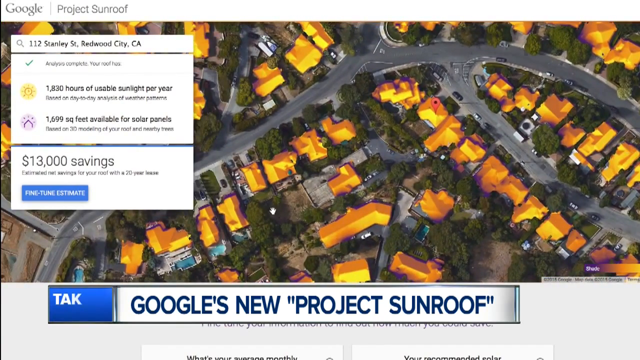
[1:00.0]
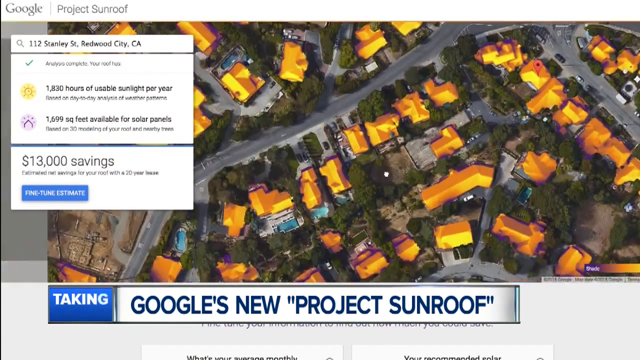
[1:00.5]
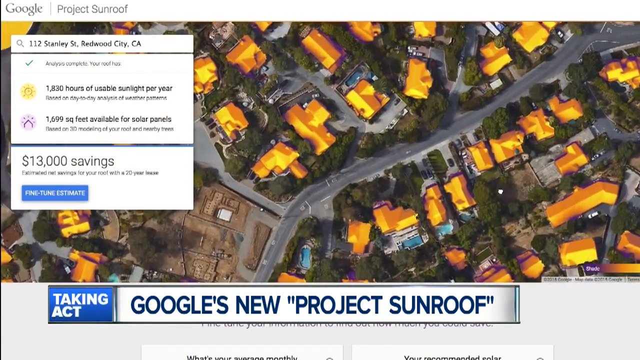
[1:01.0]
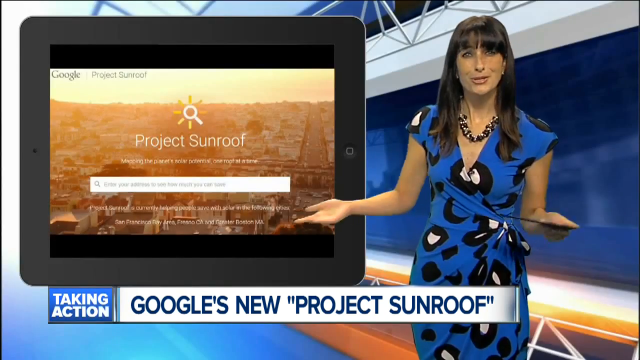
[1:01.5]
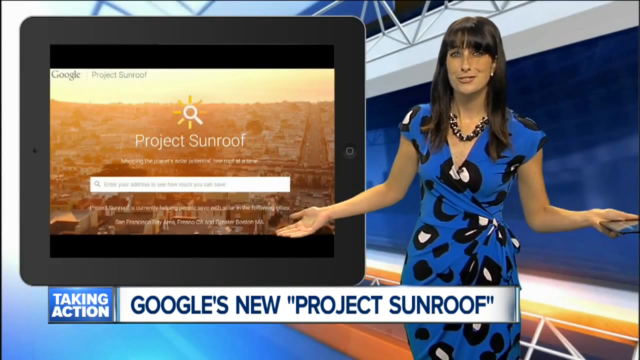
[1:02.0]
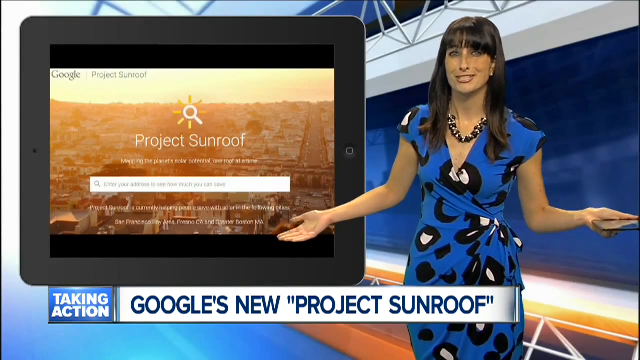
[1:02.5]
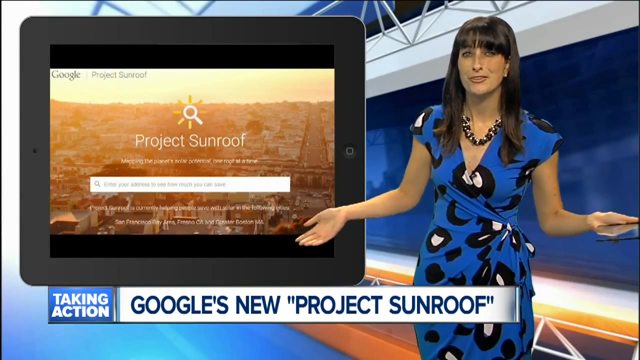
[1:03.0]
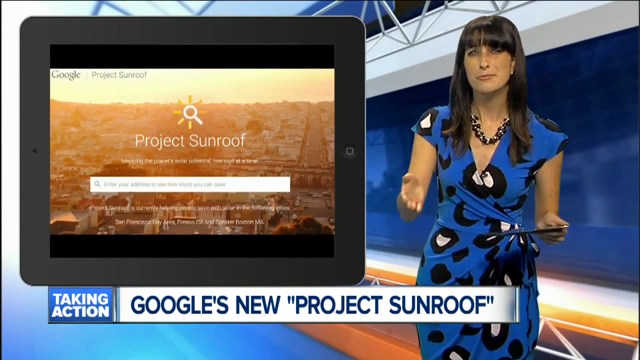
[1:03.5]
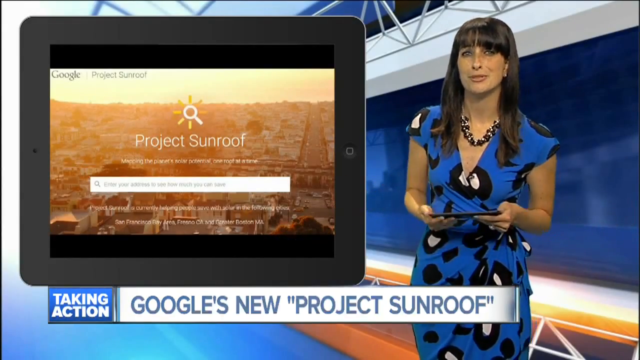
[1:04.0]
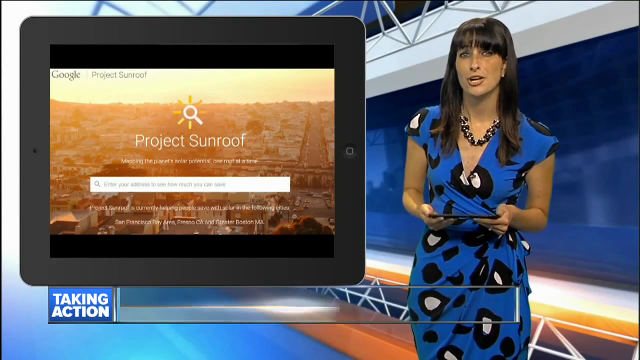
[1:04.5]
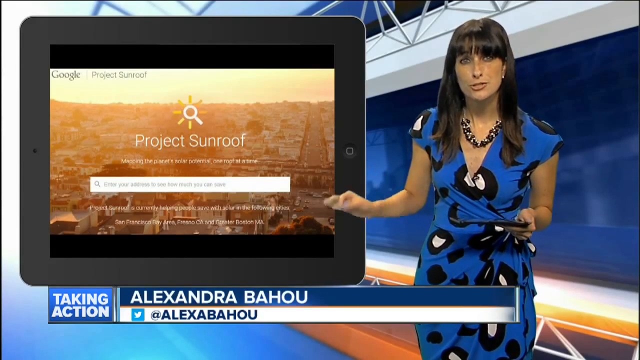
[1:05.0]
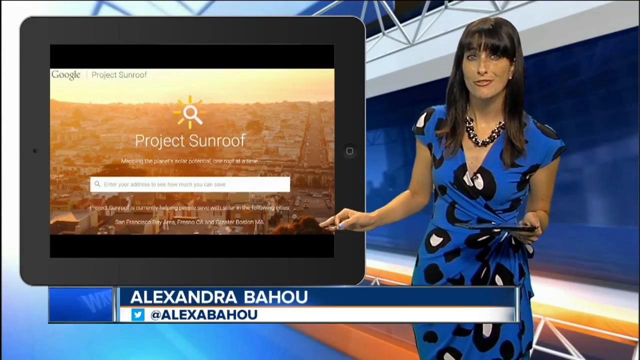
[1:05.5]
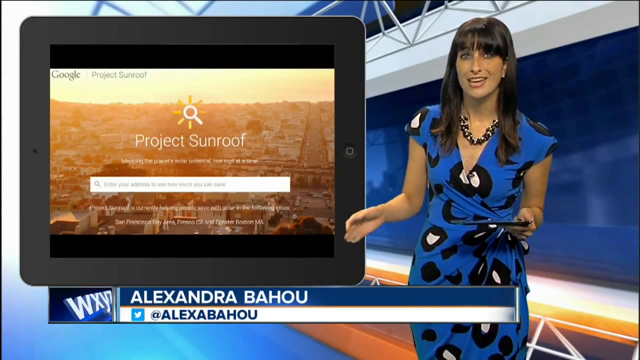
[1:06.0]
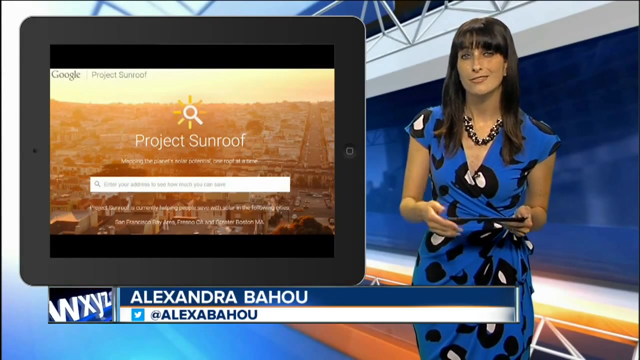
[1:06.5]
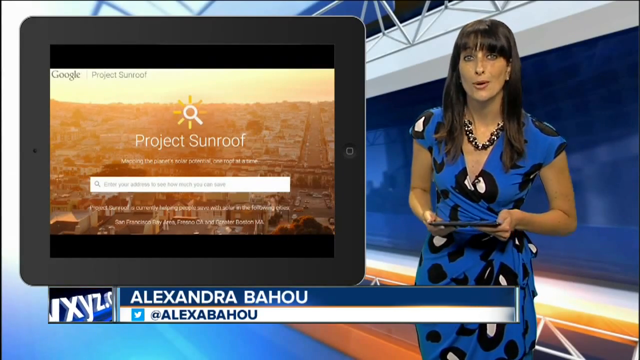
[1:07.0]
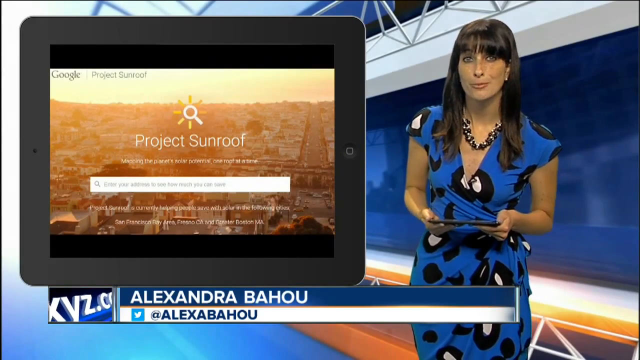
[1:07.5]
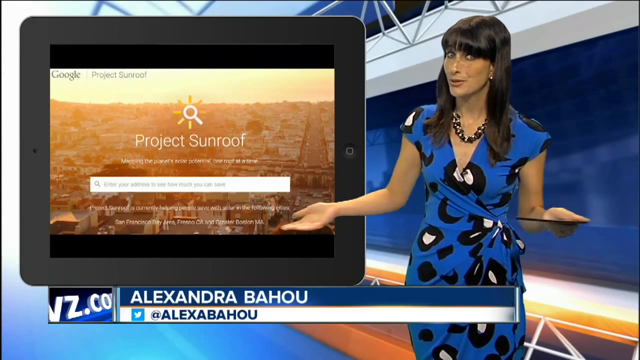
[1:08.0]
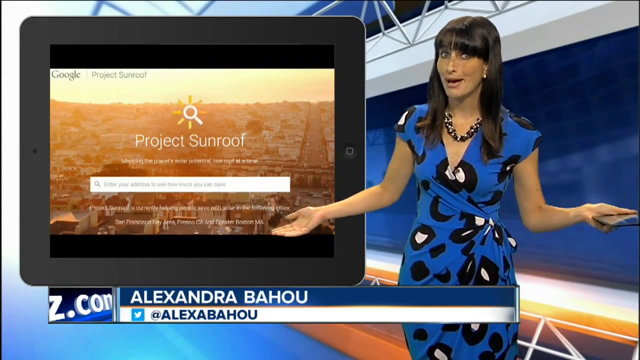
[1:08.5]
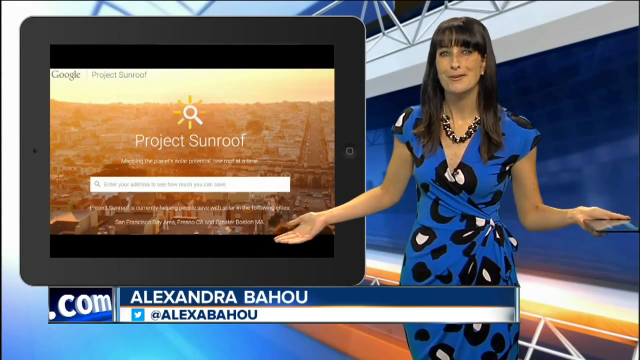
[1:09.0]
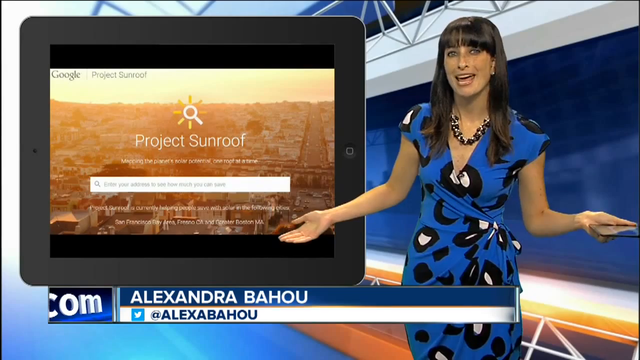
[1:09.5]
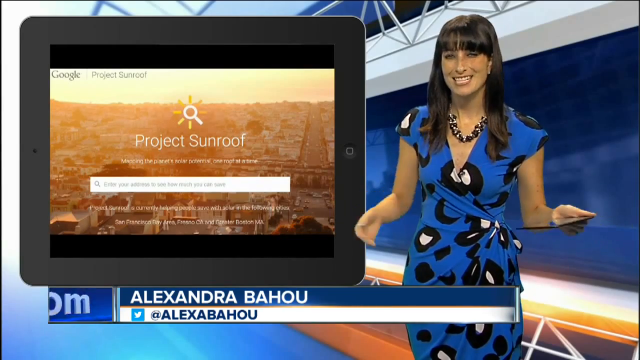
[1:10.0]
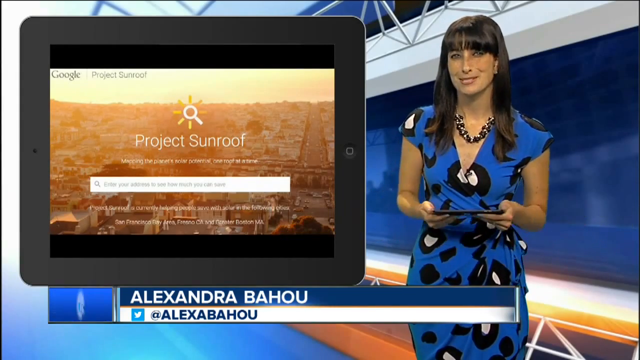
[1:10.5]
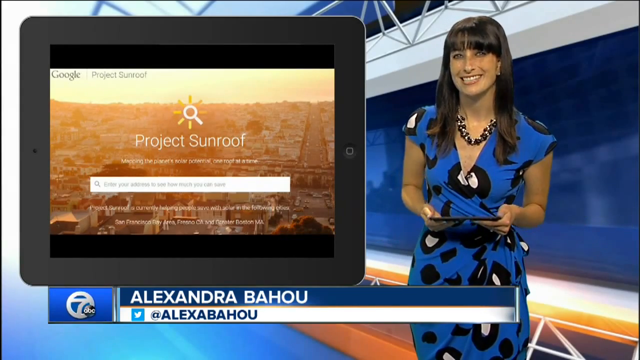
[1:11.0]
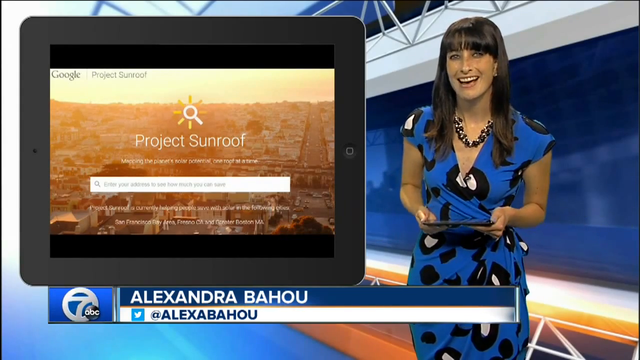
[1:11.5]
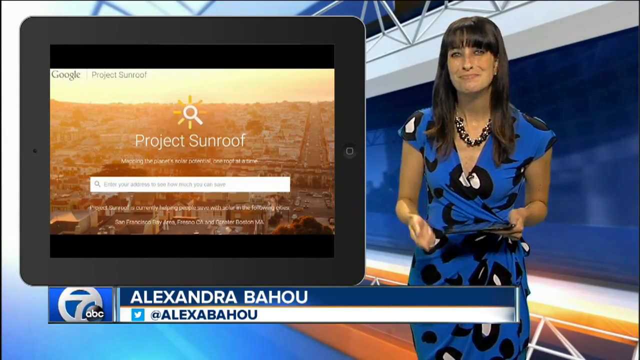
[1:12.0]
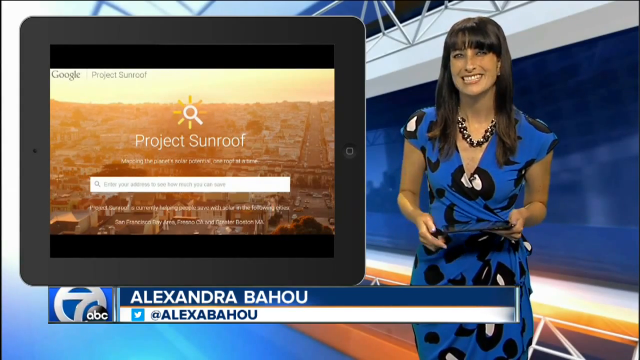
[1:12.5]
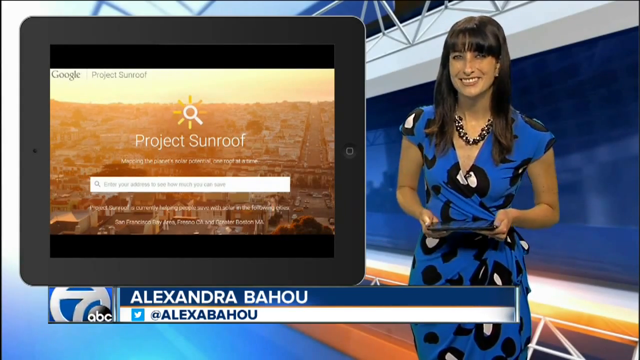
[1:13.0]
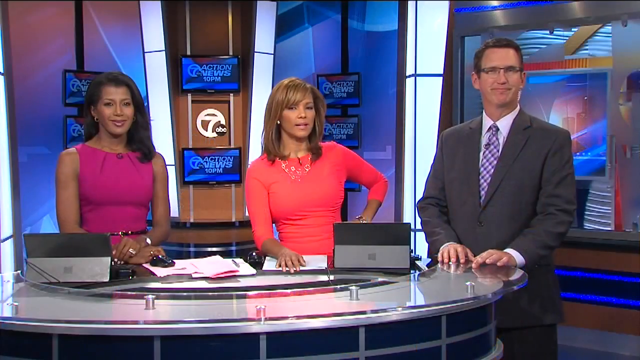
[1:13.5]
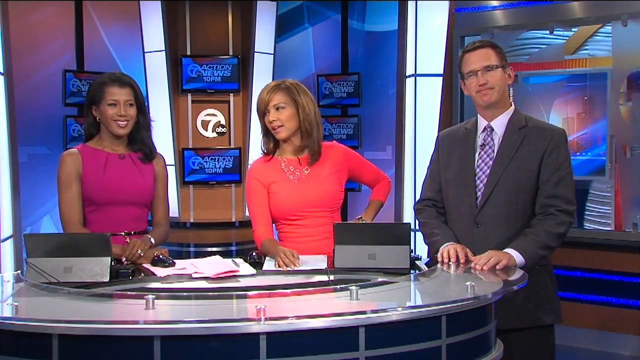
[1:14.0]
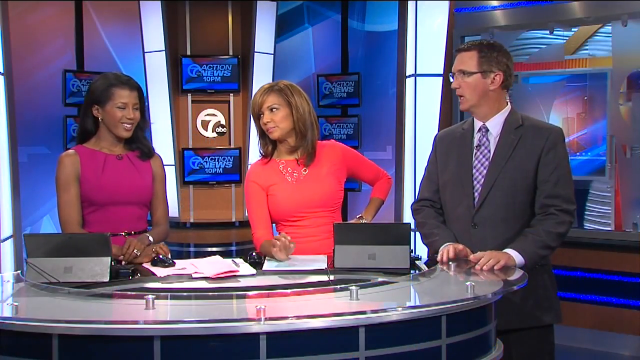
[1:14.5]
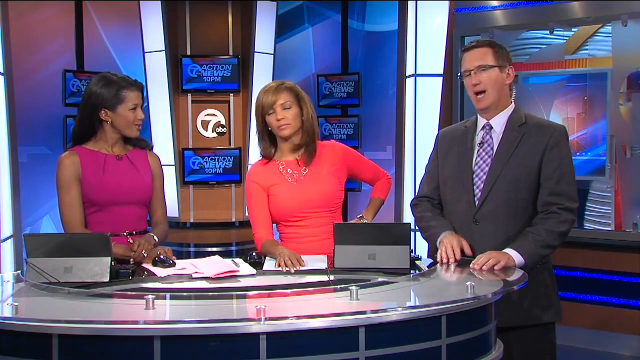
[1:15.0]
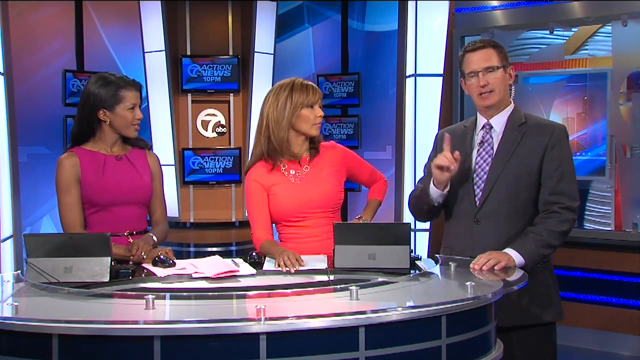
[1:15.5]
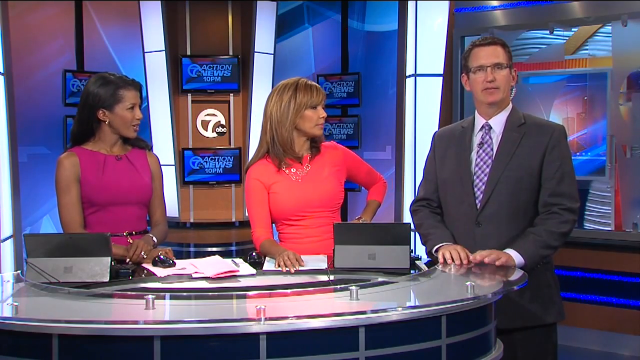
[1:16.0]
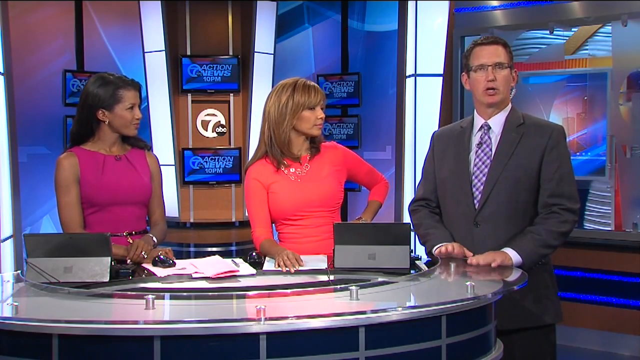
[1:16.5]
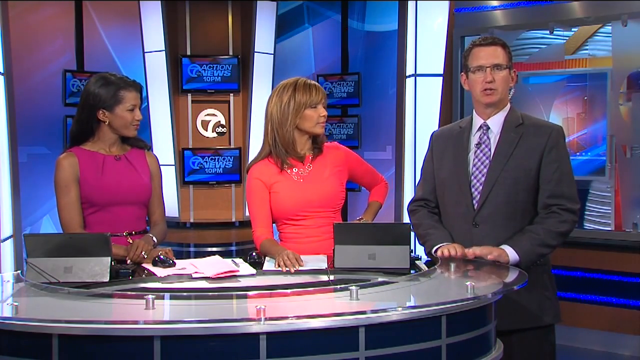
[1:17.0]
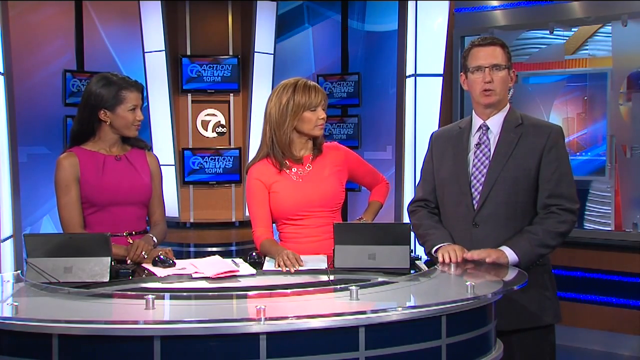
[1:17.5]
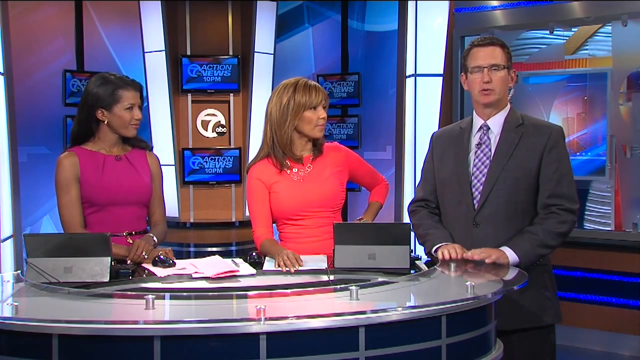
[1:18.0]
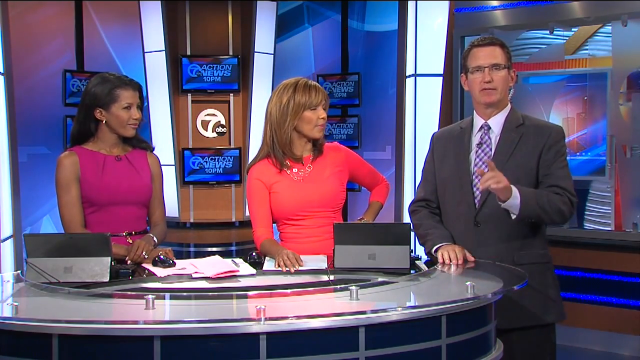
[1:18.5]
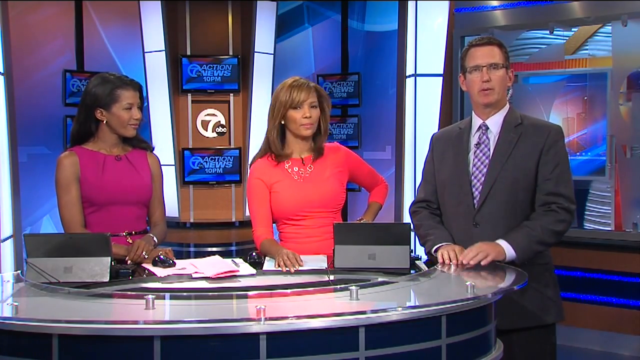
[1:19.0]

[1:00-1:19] An overhead view looks down on the suburban neighborhood, where the houses have gold-yellowish roofs. At the top right of the screen is the address "1112 Stanley Street, Redwood City, CA", and at the bottom, blue lettering reads "Google's new 'Project Sunroof'", with Project Sunroof in quotation marks. The overhead view scrolls toward the right, then the screen switches to the woman seen earlier in the video, talking. She looks to be in her early to mid twenties, with straight dark hair that goes just past her shoulders, and wears a blue dress with what look like abstract black circles with white in them and some black geometric shapes. She holds a tablet in her left hand, with both arms outstretched but bent at the elbows, and wears a thick necklace. To her right, an image of a tablet takes up most of the rest of the screen, showing "Project Sunroof" in the middle with a search engine underneath and a cityscape in the background. She smiles while talking; her bangs are cut straight across. She brings her hands together and holds the tablet in them. The screen then switches to the two women seen earlier, now joined by a man on the far left. He wears a grey suit, a white shirt and a purple tie with purple and white squares, and glasses. He is Caucasian, looks to be in his 30s, and has brown hair cut close and shaved on the sides, with the top looking like a crew cut that has just started to grow out. The woman in the middle has her hand on her waist and wears a pink long-sleeved spandex shirt and a gold necklace; she looks to be in her late 20s and has reddish-brown hair that goes just to her shoulders, with bangs swept to one side that blend into her hair. To her right, a woman wears a purple dress that looks to be made of a spandex-like material, with her hands crossed on the table; she looks to be a mix of African American, Caucasian and Southeast Asian. In the background are the number seven and ABC, and six TVs on the wall all showing "Action News 10 p.m." and the number seven. The man talks while tapping his hands on the table, at one point raising a hand with his fingers pointing straight up, then putting both hands back on the table and tapping them. Still talking, he lifts his left hand and points a finger straight ahead. The screen then switches to a graphic with "7" in a white circle and "ABC" in a small black circle attached to its side, "Action News" in white letters, and "10 p.m." in reddish-orange letters underneath. To the left of "10 p.m.", the number "20" appears in white letters in a red square, with "Detroit" underneath the square.